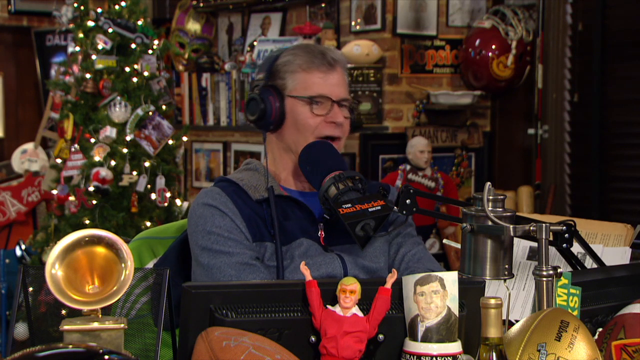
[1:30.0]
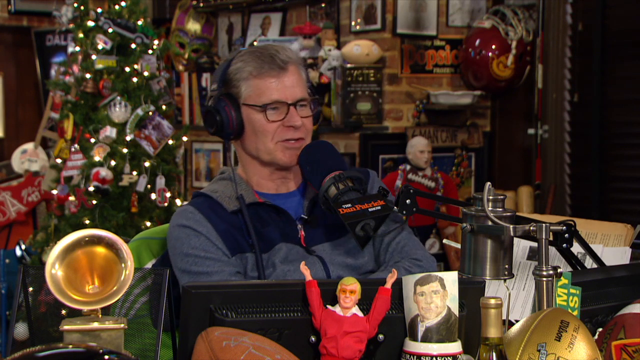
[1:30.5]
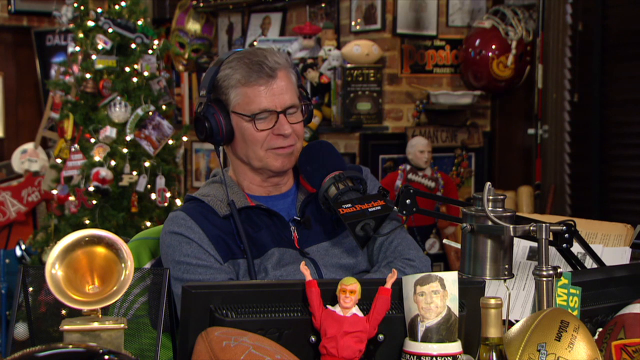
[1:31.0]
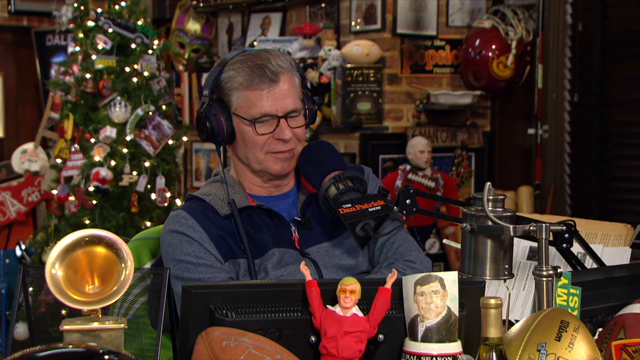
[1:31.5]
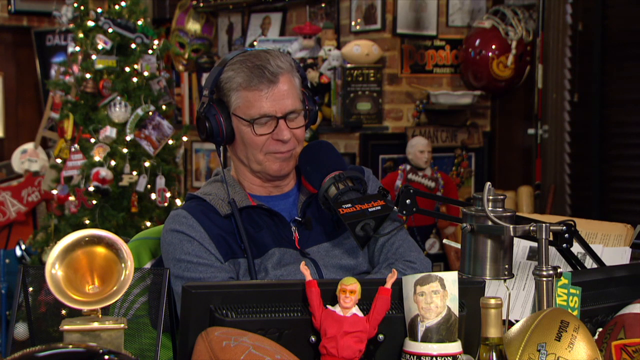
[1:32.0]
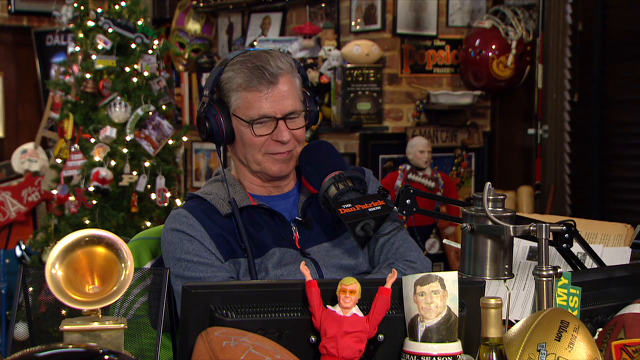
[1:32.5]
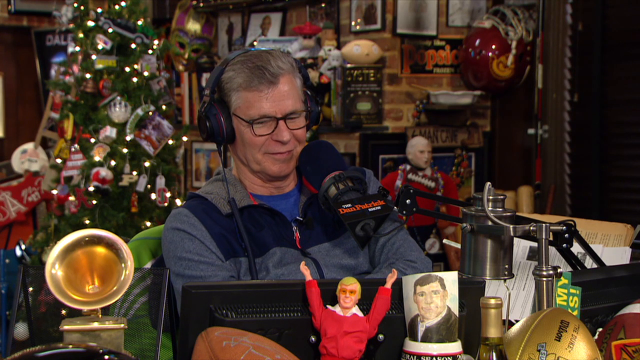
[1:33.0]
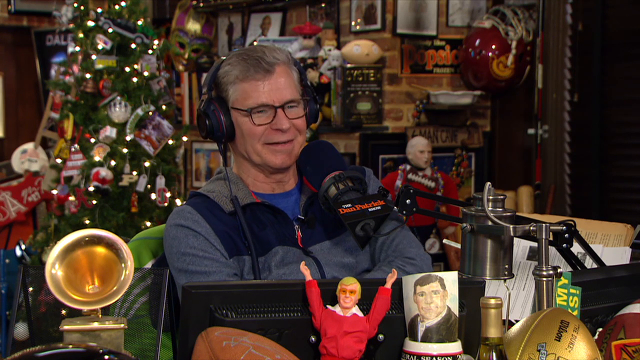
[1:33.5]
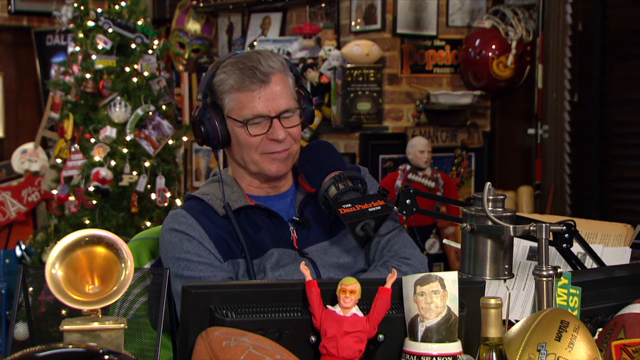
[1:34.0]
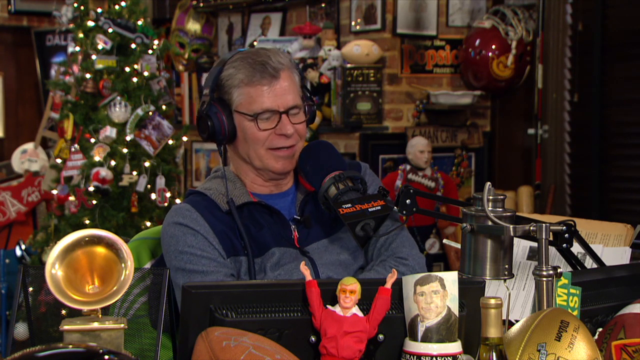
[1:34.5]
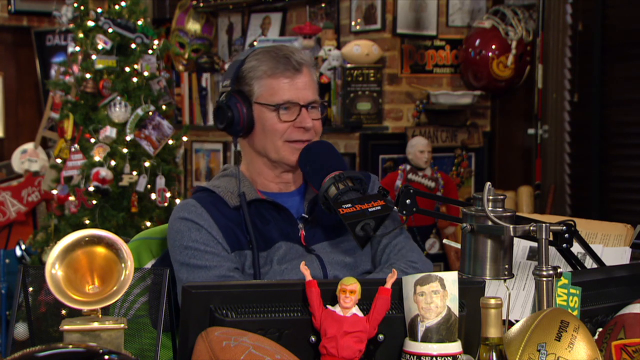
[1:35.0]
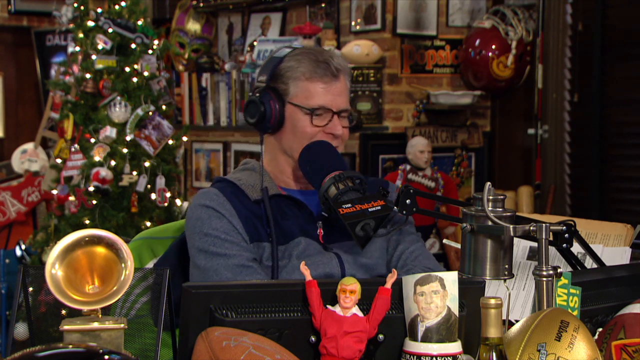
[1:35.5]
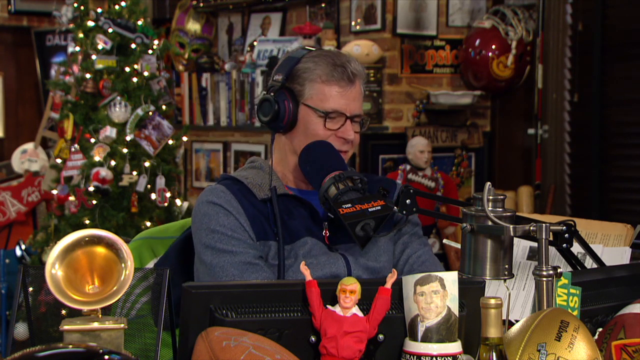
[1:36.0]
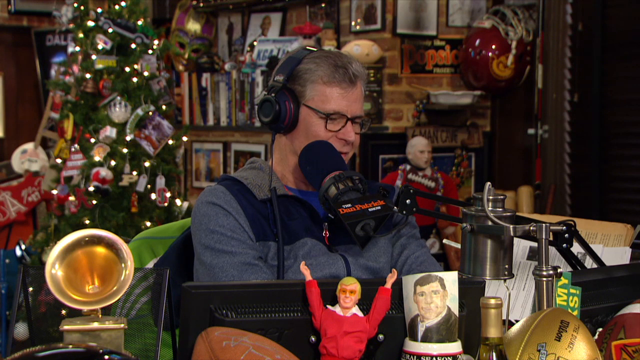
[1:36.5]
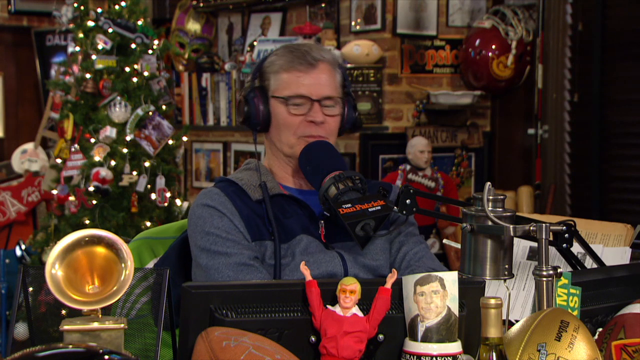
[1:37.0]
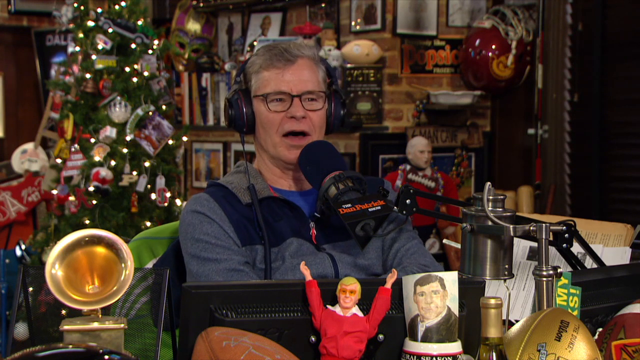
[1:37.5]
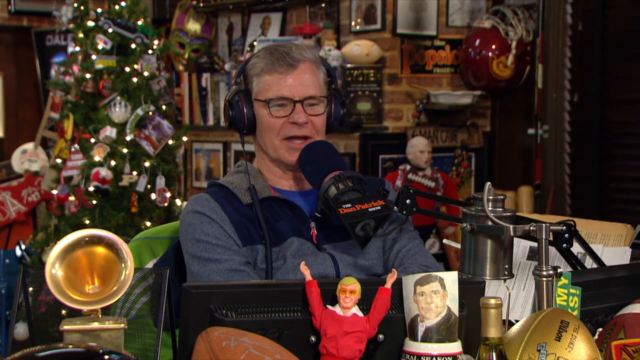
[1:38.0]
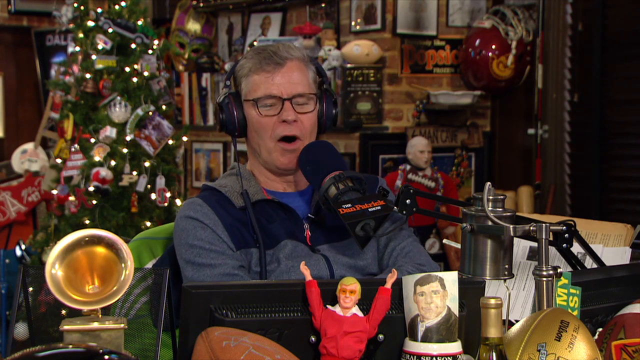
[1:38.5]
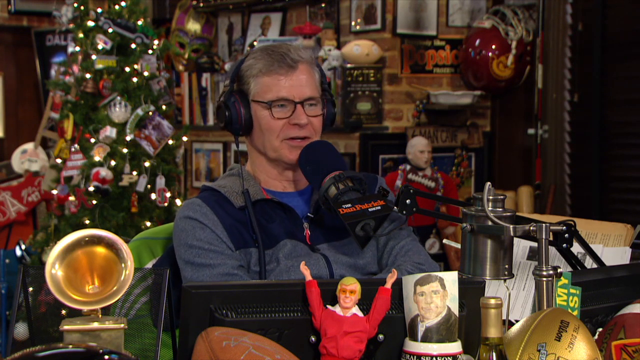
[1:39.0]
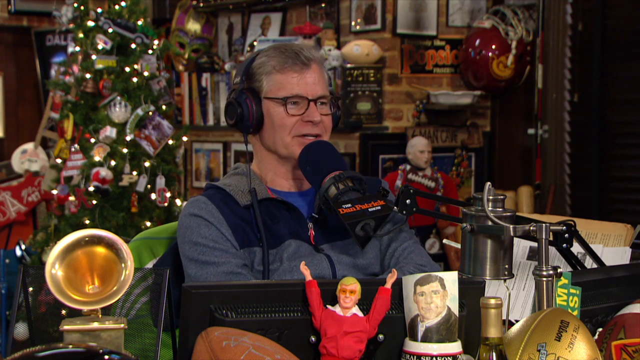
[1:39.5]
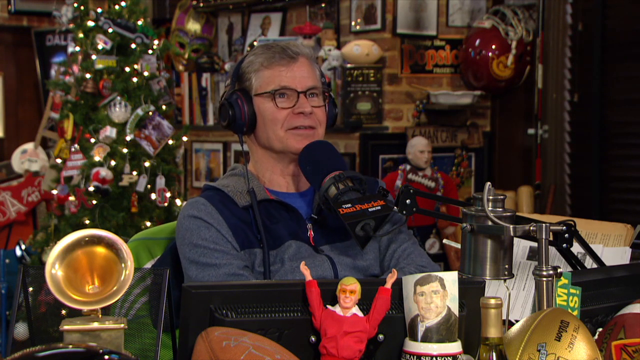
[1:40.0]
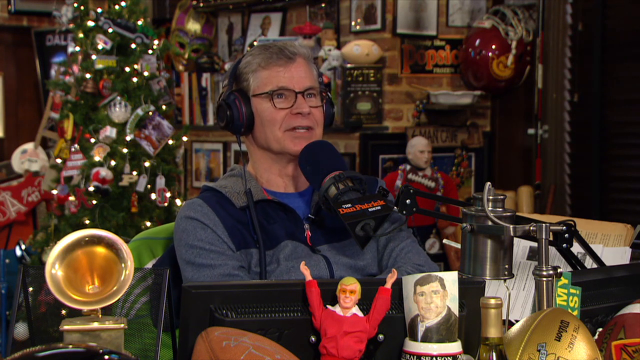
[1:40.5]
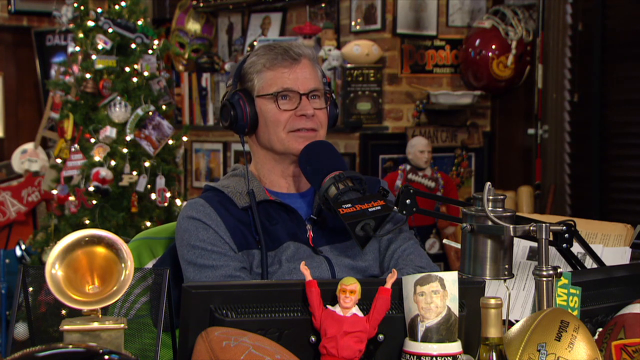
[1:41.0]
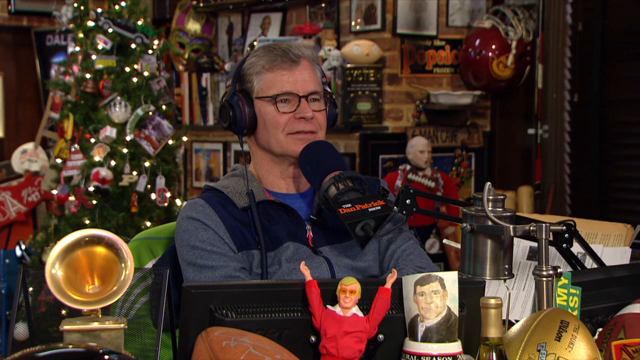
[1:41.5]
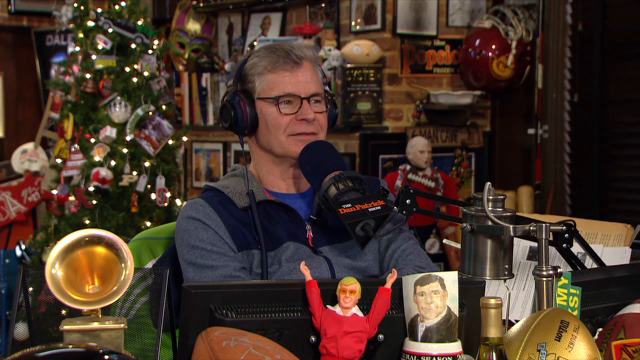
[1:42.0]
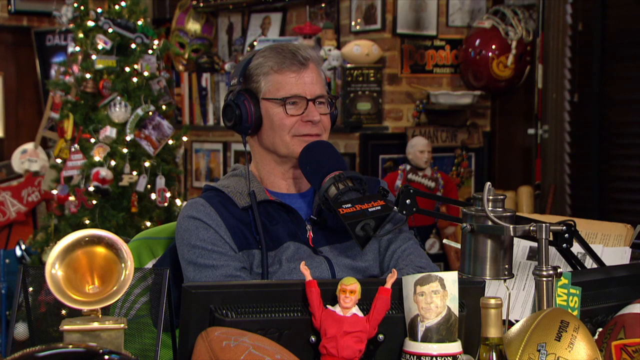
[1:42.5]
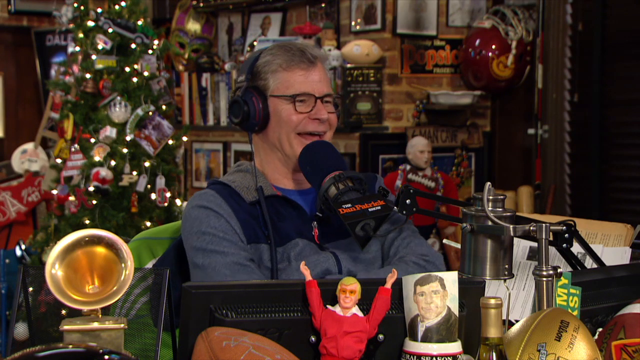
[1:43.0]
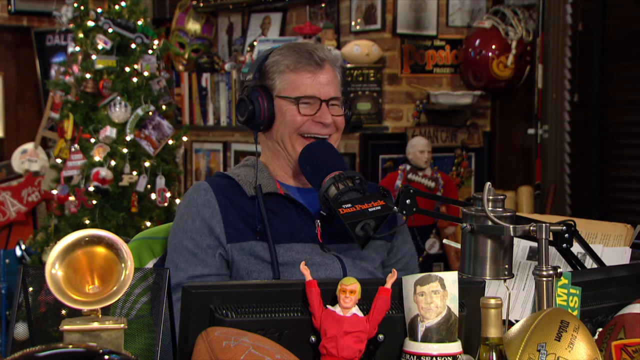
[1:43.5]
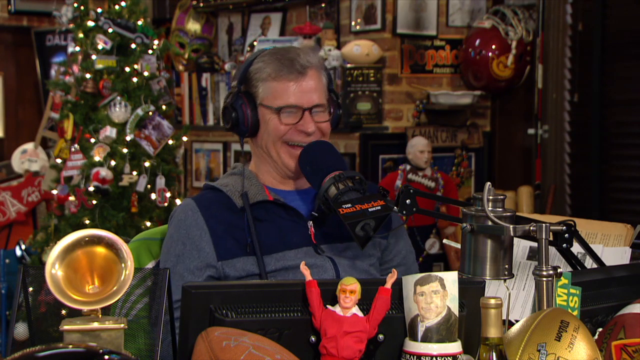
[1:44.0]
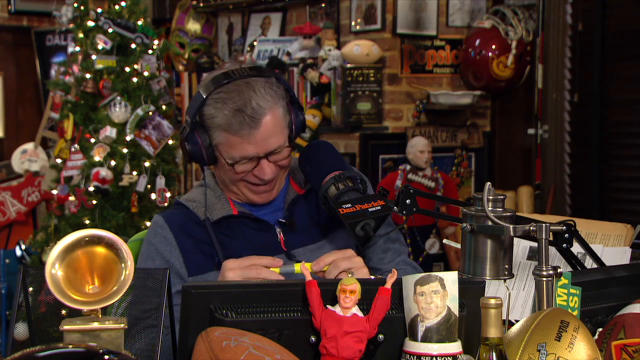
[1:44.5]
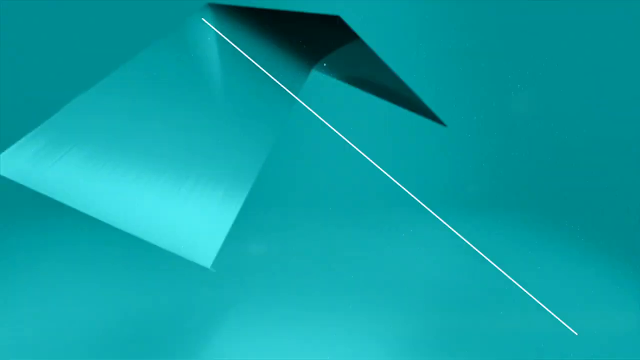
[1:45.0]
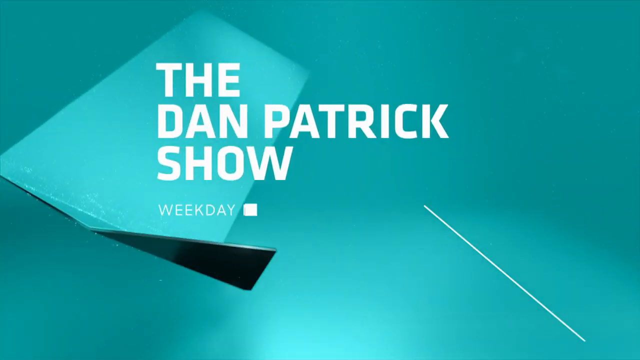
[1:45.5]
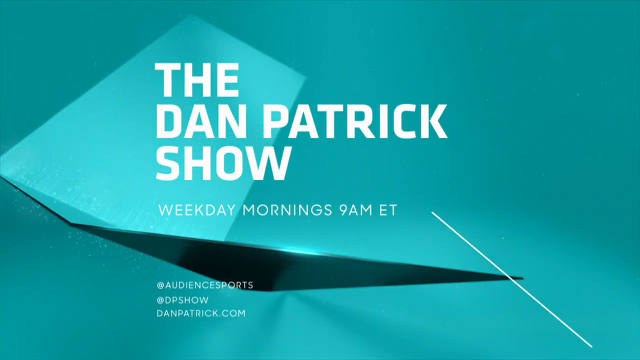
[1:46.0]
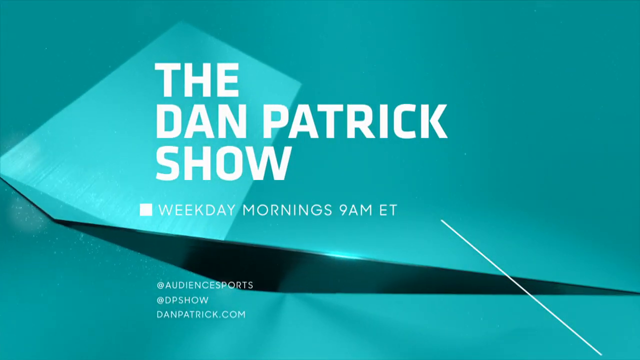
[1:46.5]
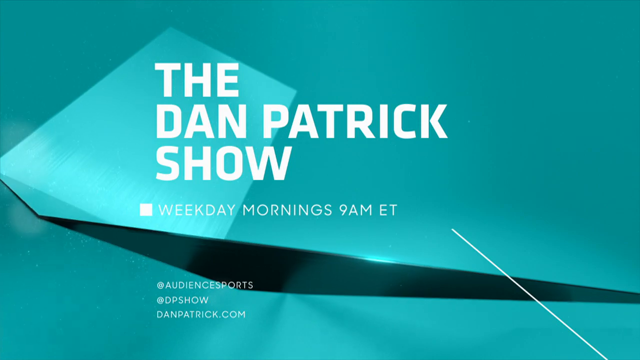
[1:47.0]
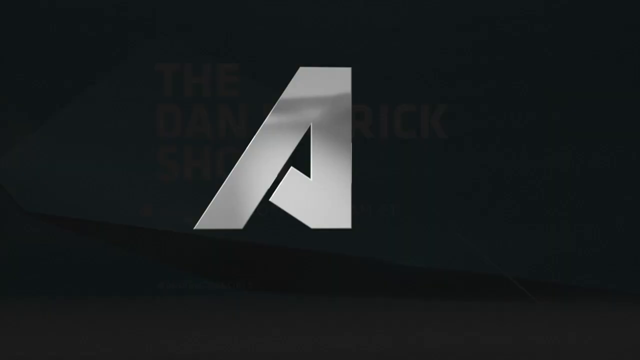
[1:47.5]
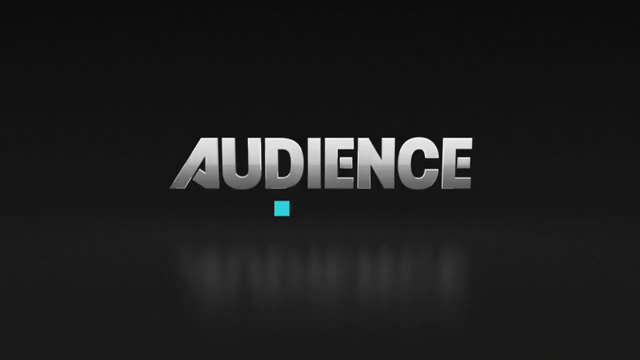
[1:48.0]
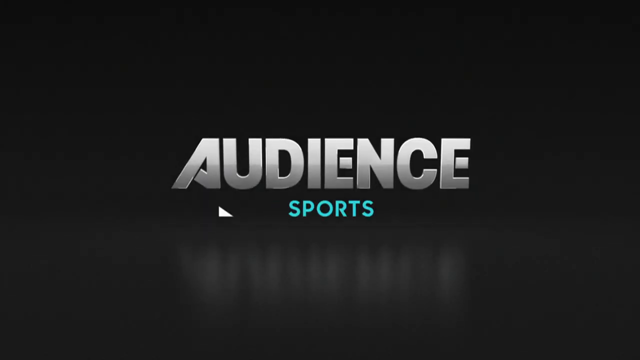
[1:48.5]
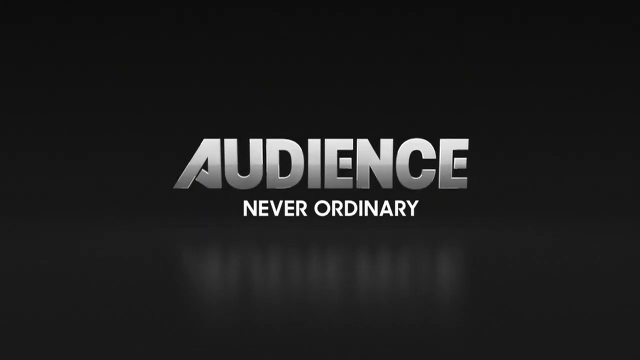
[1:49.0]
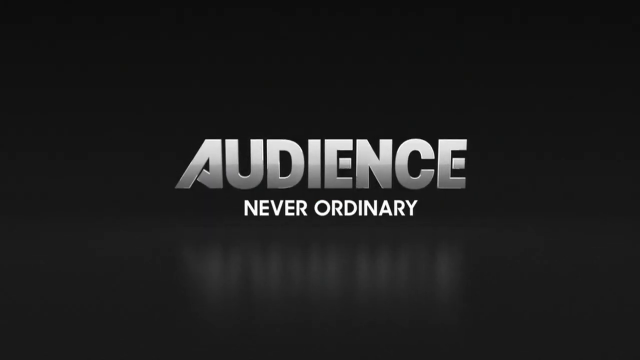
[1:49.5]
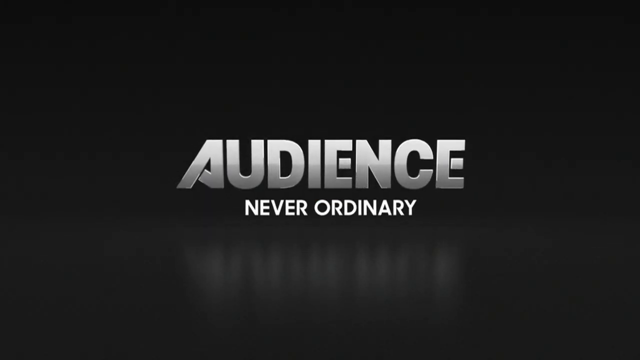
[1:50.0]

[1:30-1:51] Dan Patrick fidgets back and forth, pulling at his arms, wearing the jacket over a royal blue shirt. He says a few things without talking over the guest, laughs a couple of times, and looks down at what appears to be a yellow highlighter held at his fingertips in both hands. Then an animation appears with a teal background and "the Dan Patrick show": "the" on one line, "Dan Patrick" on the second, and "show" on the third, slightly off-center to the left. A lighter-colored rectangle, looking like a 3D shape, comes down, and a very dark flap comes down toward the viewer in a triangular fashion, extending out as it comes across. Underneath the Dan Patrick Show, next to a little white square like a bullet point, it says "weekday mornings 9 a.m. Eastern". In the same color, somewhat hard to read because it is written over the shape, are "@AUDIENCESPORTS", "@DPSHOW" and the website "Dan Patrick.com". The video ends with a black screen showing "audience" with "never ordinary" underneath it.